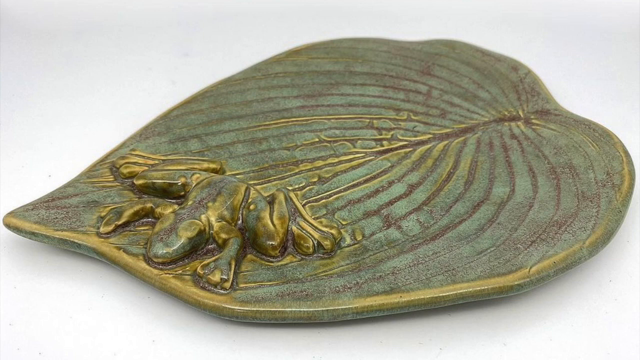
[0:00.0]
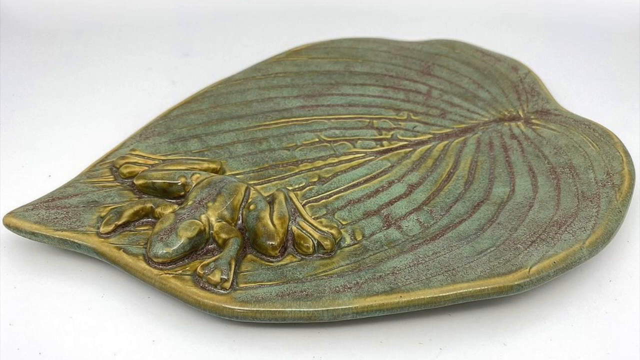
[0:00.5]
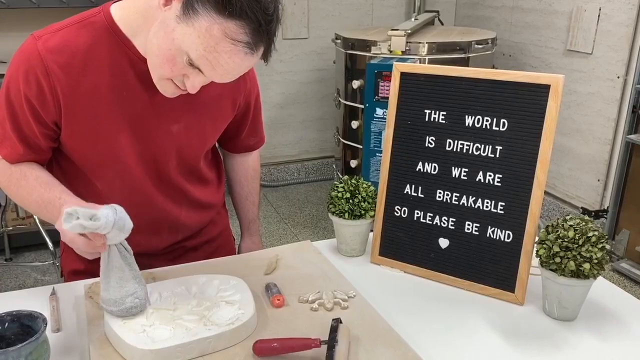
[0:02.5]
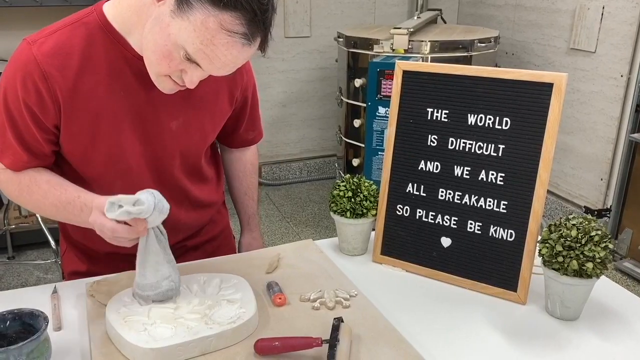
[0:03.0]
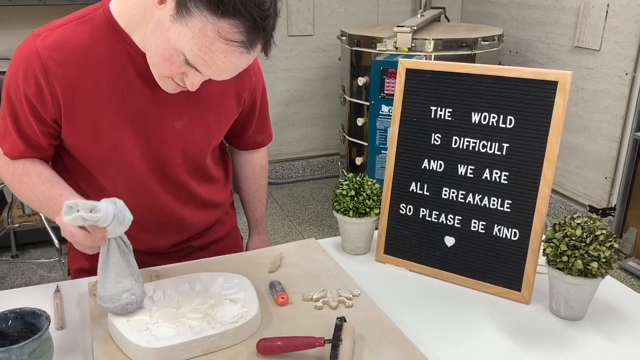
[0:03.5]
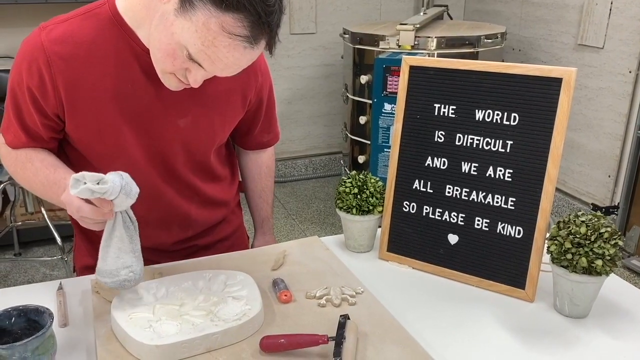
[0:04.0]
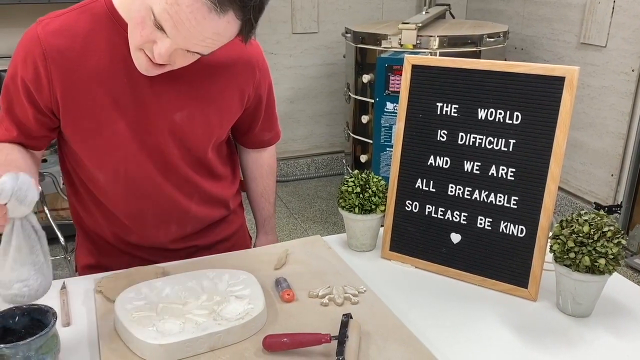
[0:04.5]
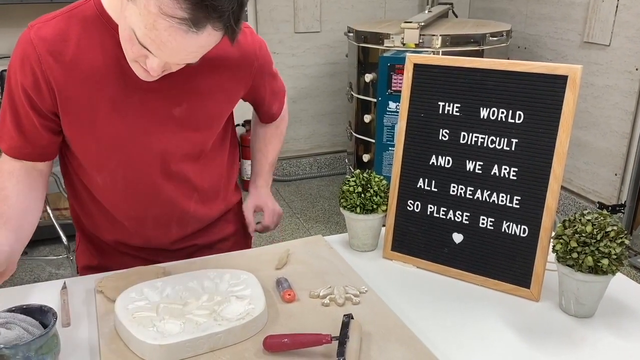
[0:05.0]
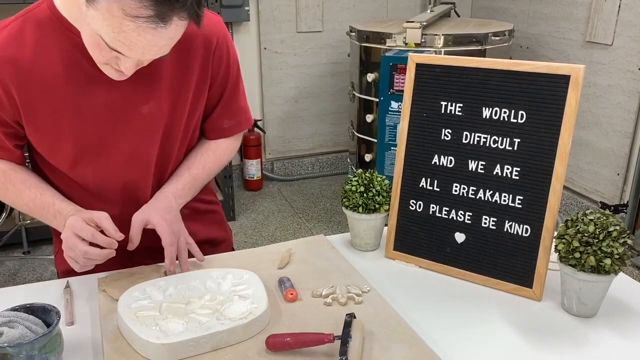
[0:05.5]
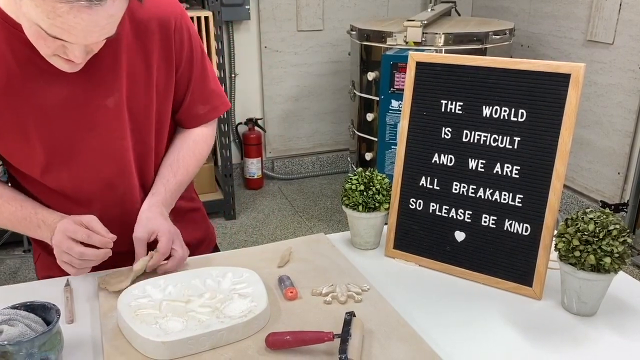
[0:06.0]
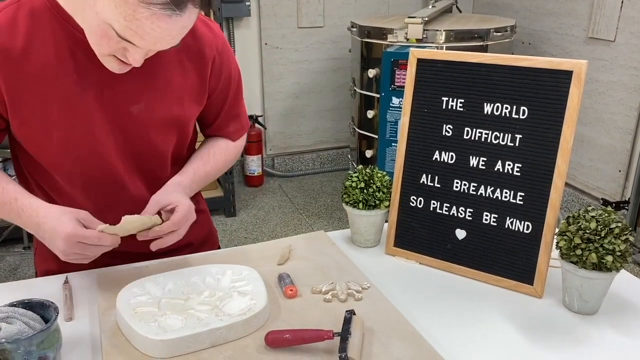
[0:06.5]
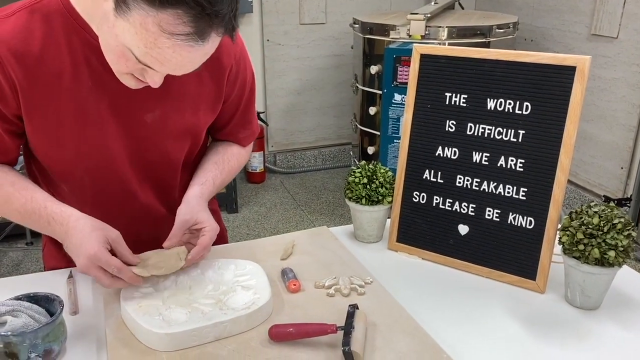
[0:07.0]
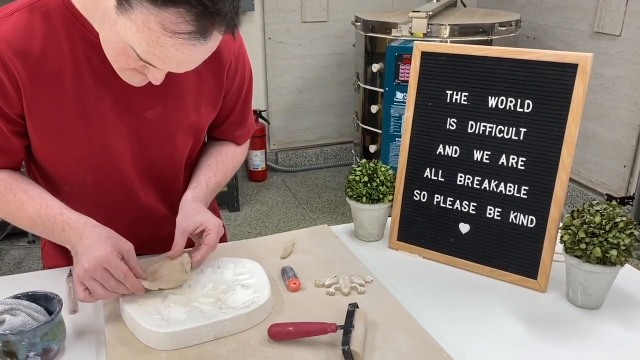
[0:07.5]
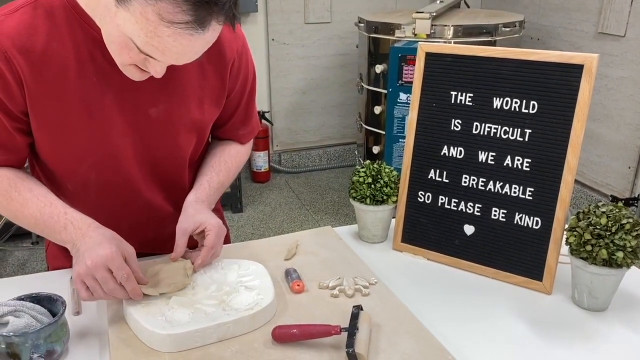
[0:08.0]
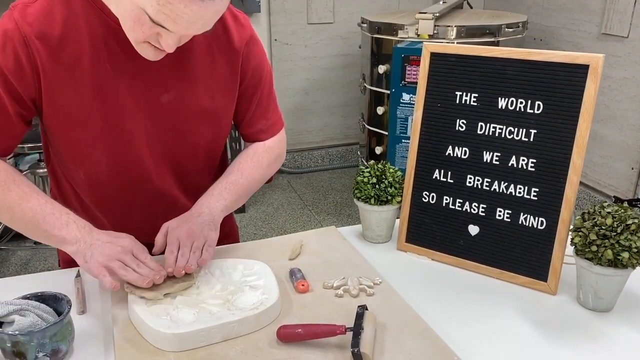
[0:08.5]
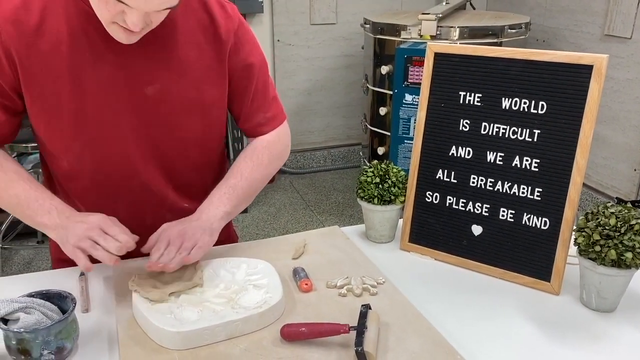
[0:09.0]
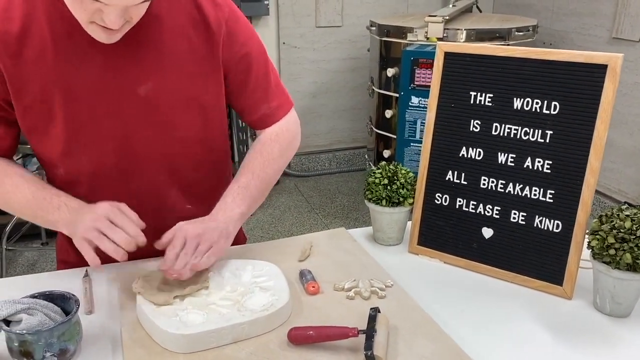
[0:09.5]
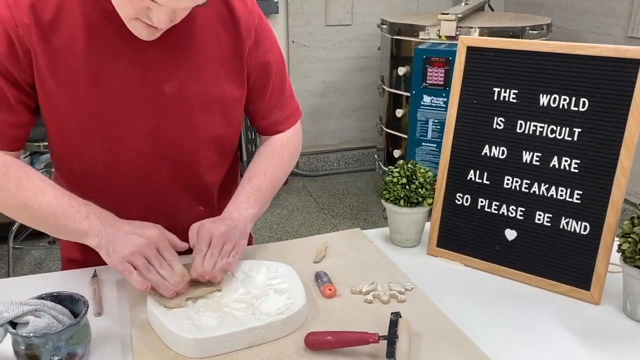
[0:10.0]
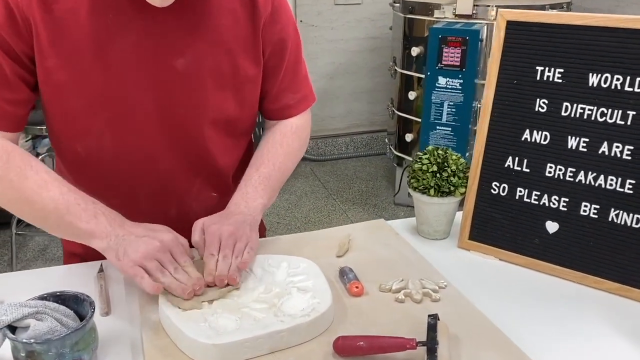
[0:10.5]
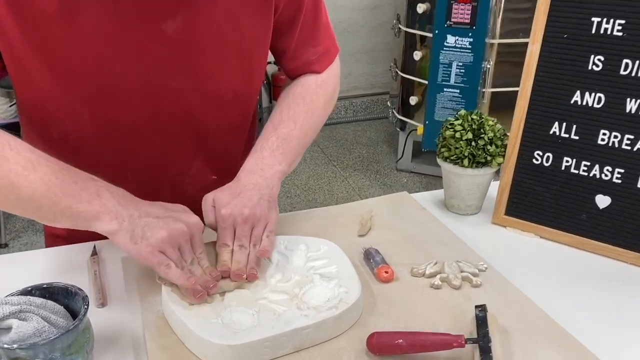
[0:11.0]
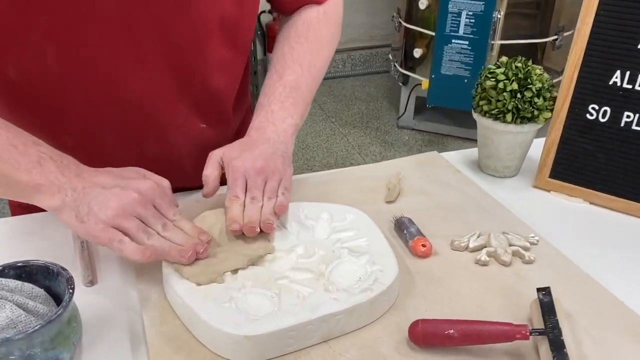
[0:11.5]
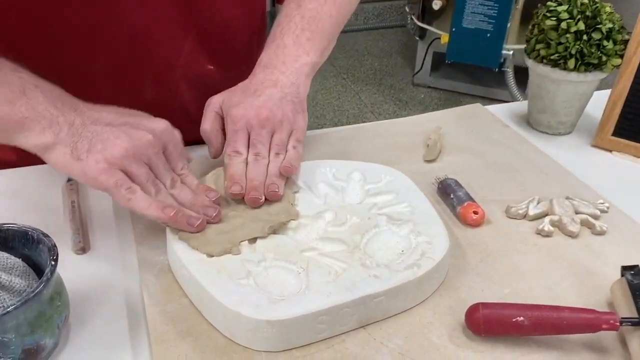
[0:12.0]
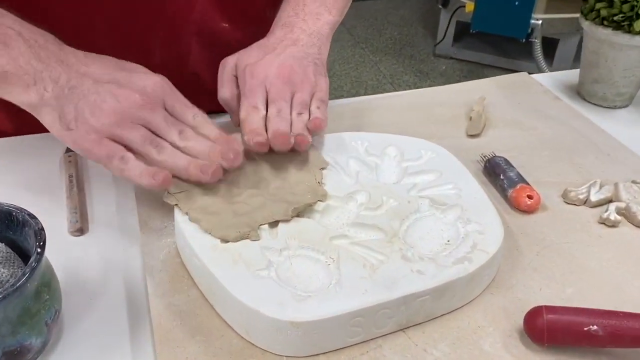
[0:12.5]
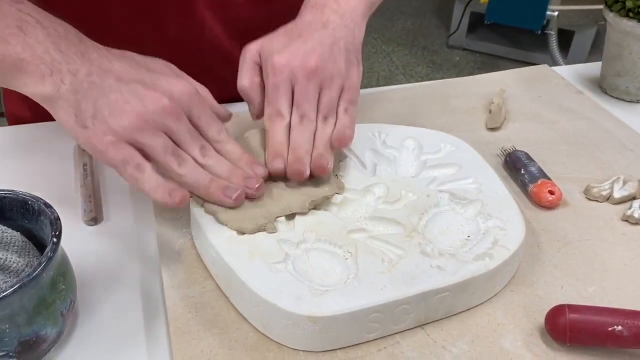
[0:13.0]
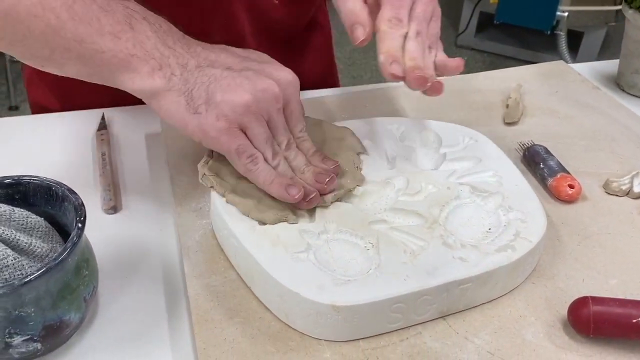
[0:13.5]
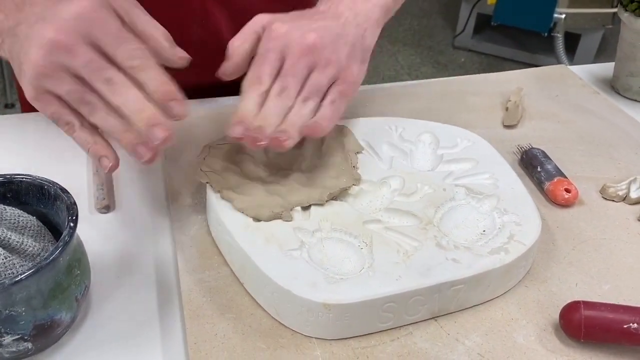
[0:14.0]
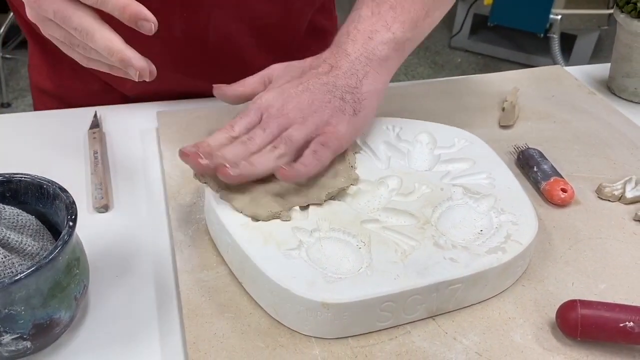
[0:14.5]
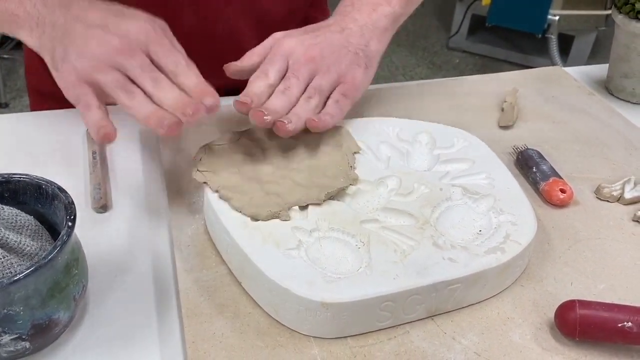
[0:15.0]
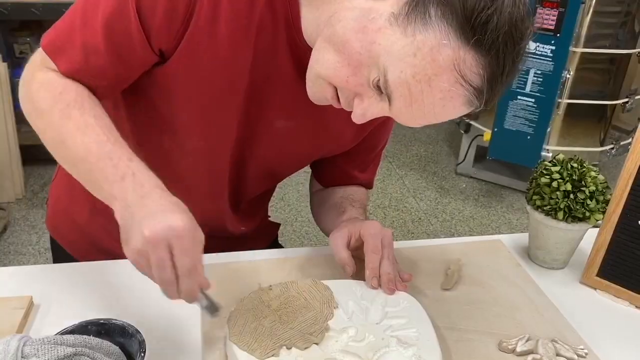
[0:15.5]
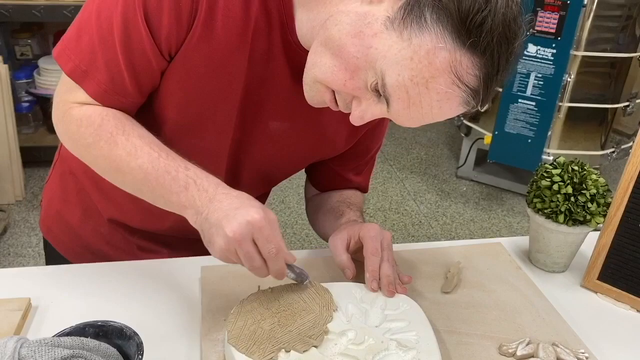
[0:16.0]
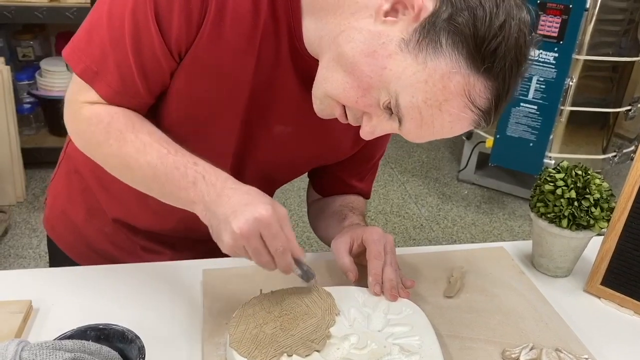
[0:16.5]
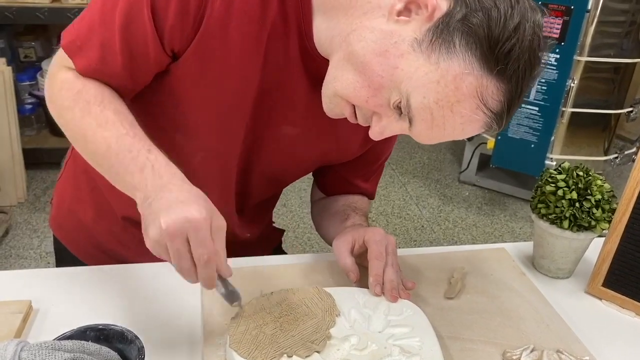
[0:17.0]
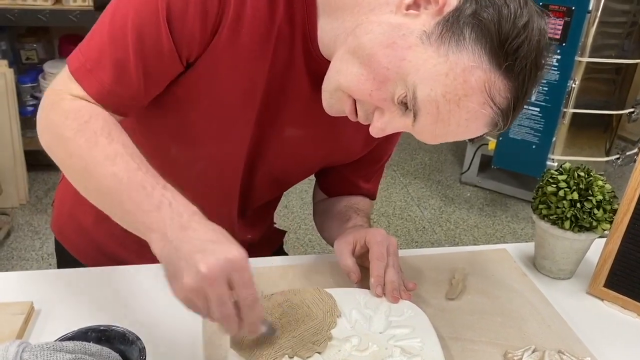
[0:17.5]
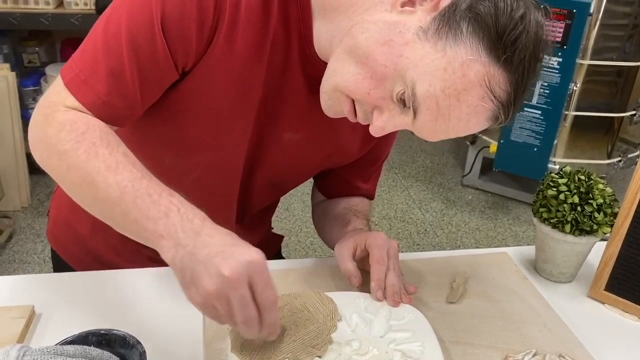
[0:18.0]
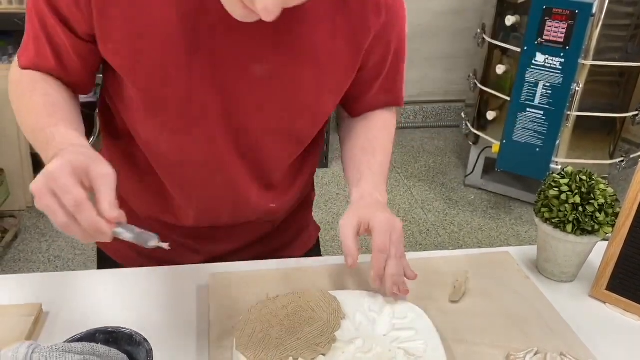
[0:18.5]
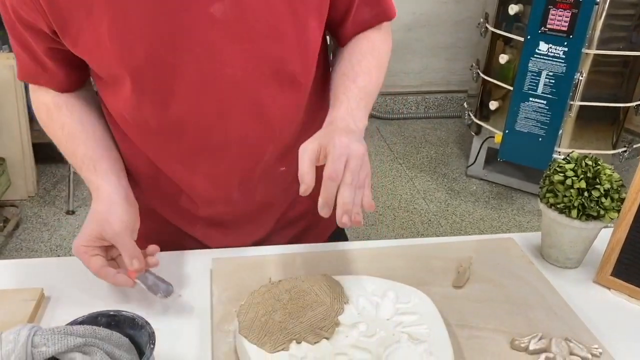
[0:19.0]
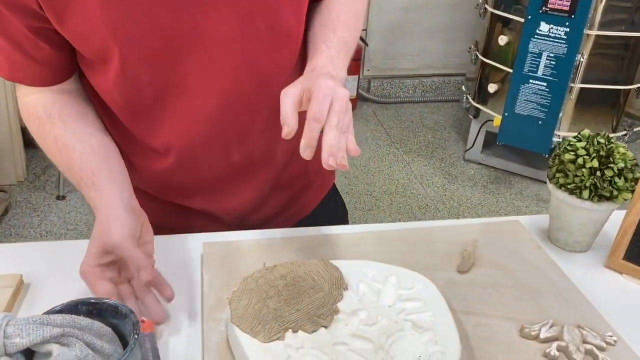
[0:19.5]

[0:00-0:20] The video opens on a decorative plate or dish shaped like a leaf, with a raised frog at its bottom. Its colors range from gold to green, with a few black highlights. After a couple of seconds, the scene switches to an art room, where a man in a red shirt appears to be working on a piece of art in front of him. The piece is white and appears possibly to be the plate shown at the start, and he uses something in a bag to tap down on it. To his right is a black sign that says "the world is difficult and we are all breakable so please be kind". The man picks up another piece of putty and presses it into the mold on the table, then uses another object to flatten it out. The putty is tan and the mold is white.